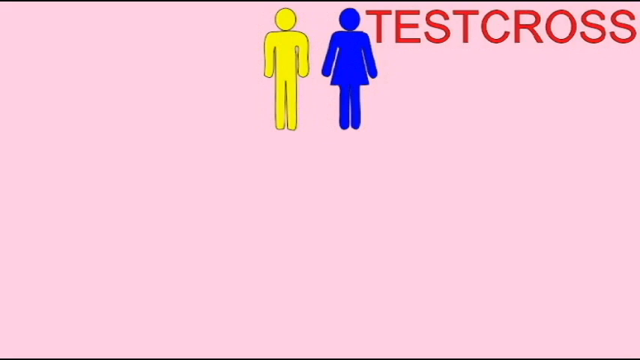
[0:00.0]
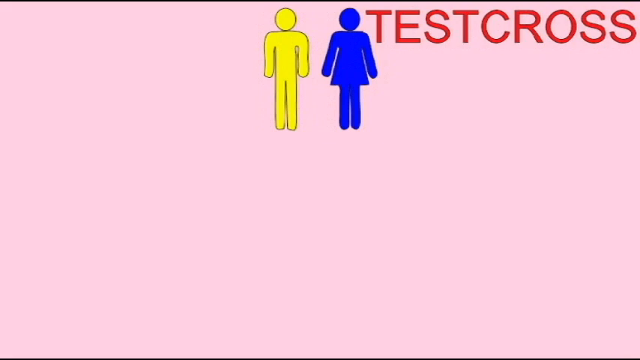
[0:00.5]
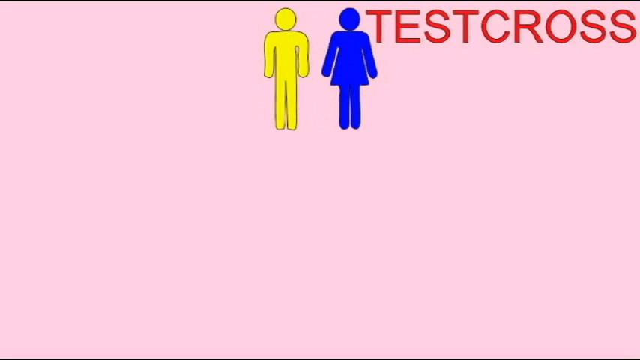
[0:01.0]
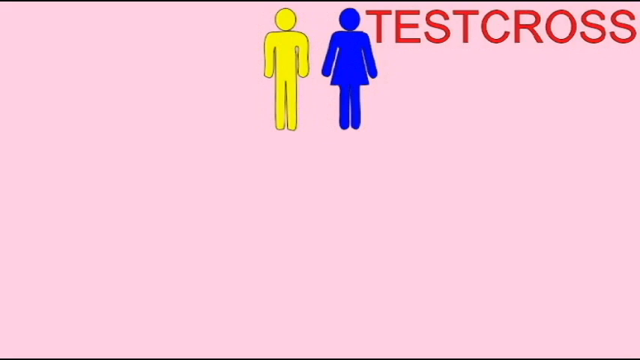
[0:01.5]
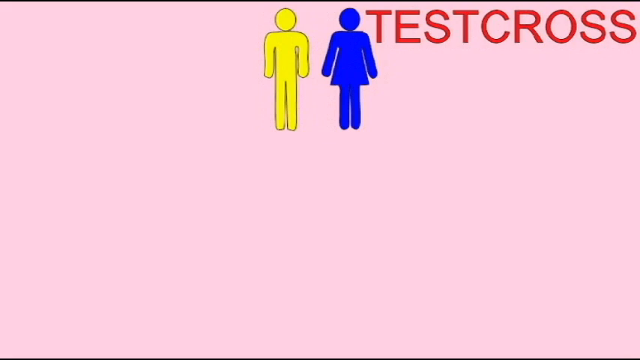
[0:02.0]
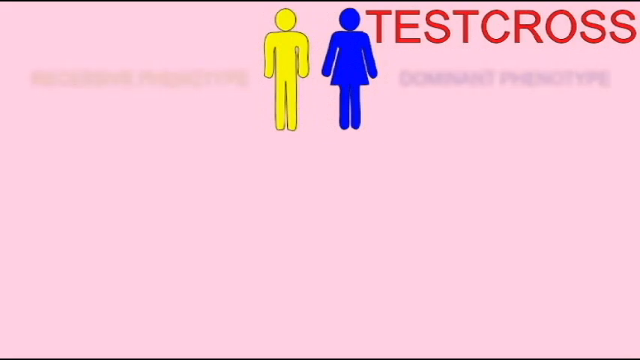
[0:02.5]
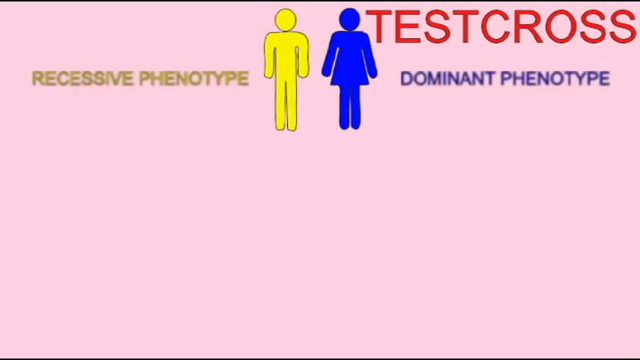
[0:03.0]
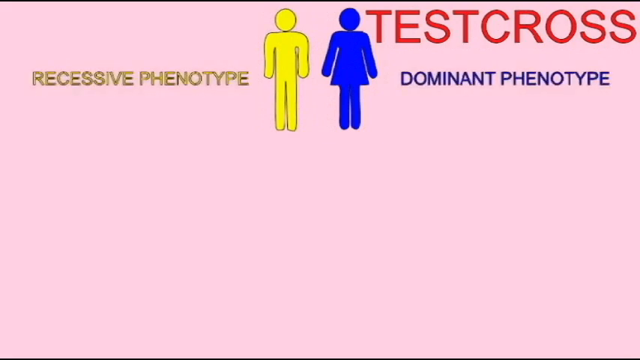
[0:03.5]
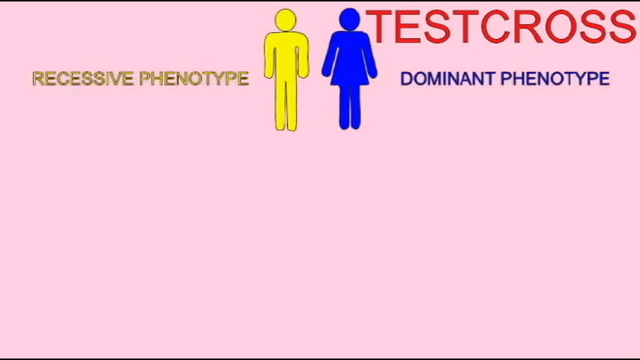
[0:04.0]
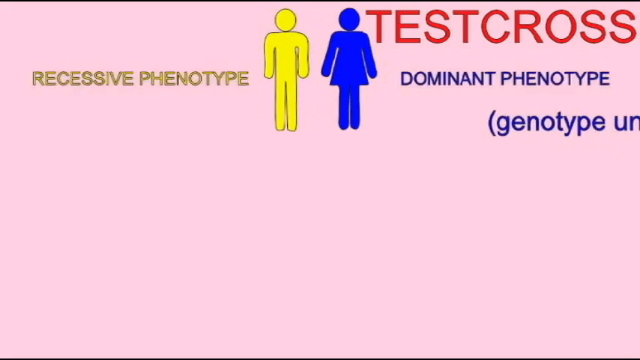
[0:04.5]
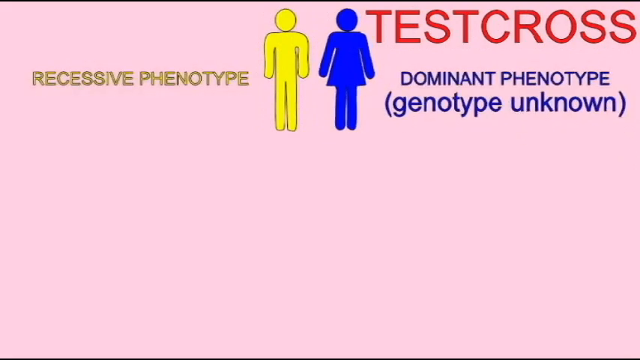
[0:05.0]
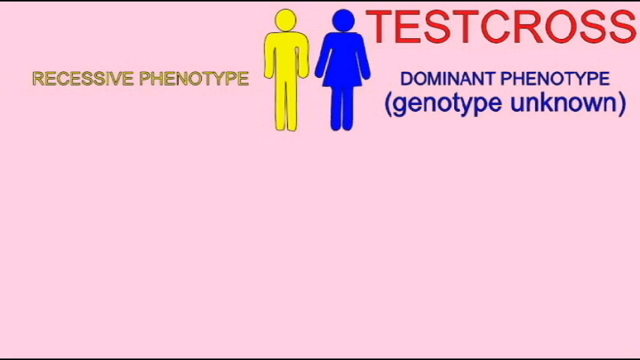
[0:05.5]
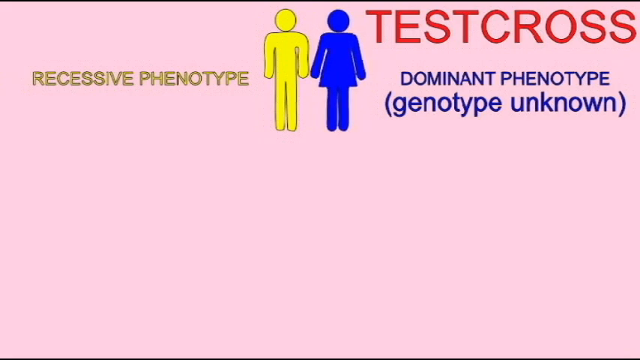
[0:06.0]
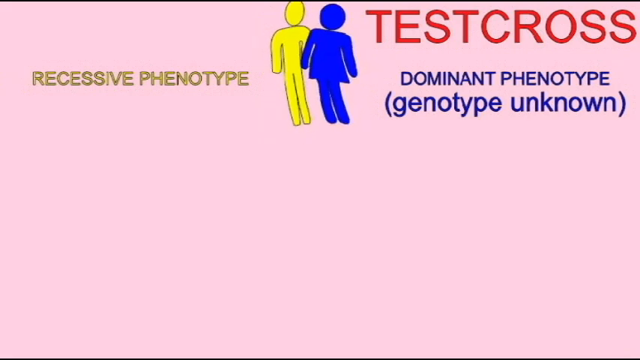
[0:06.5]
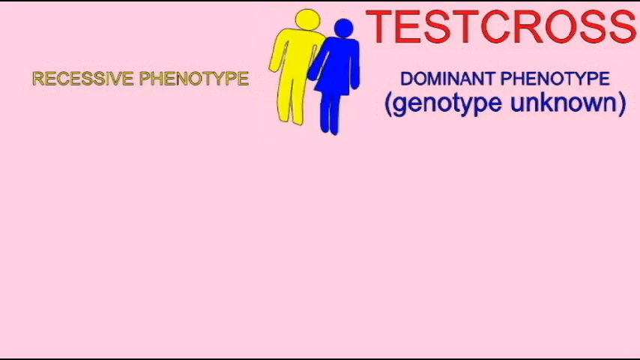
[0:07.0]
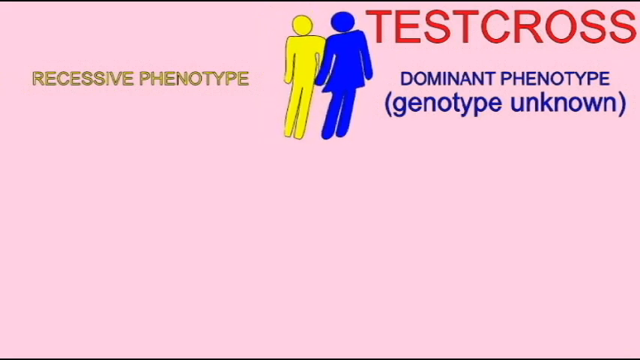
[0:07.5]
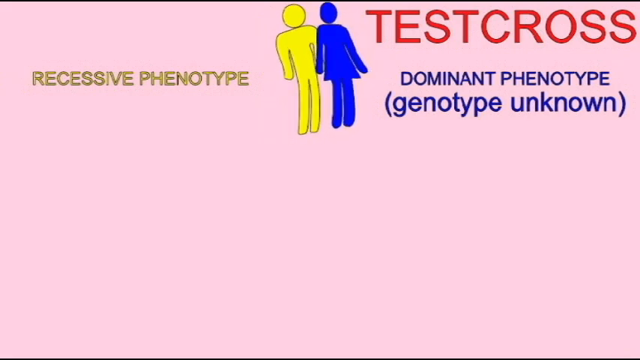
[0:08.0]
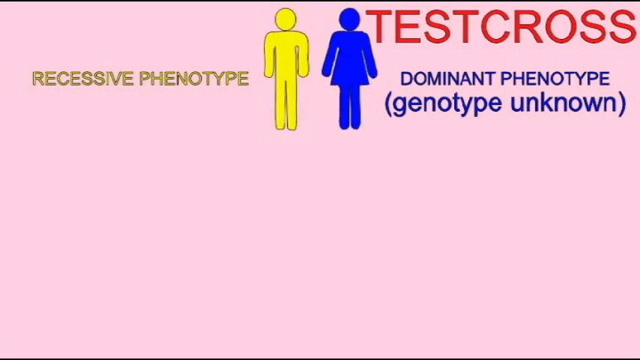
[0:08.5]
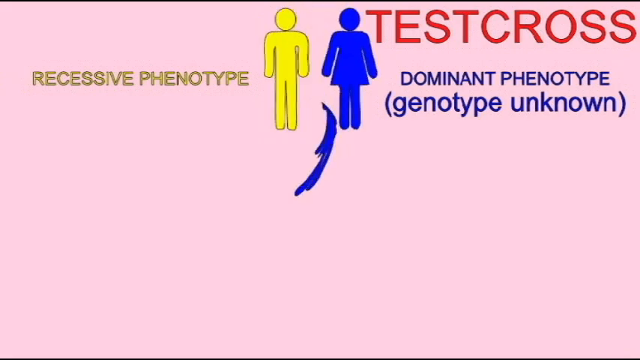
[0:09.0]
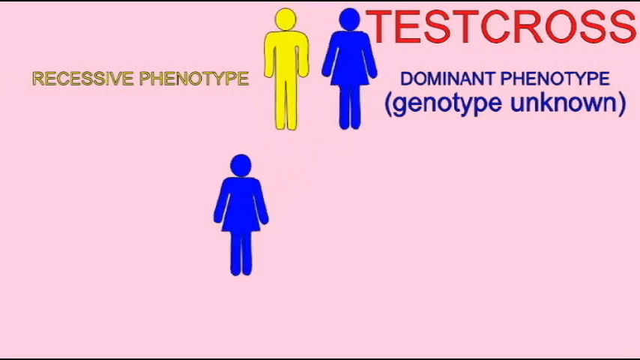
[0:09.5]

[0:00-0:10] An image of a male and an image of a female appear against an all-pink background, with "test cross" written in the right-side corner. The male image is yellow and the female image is blue. On the left side is written "recessive phenotype" and on the right side "dominant phenotype", with "genotype unknown" written in blue below "dominant phenotype". The woman moves closer to the man, and an image of a female in blue appears at the bottom.